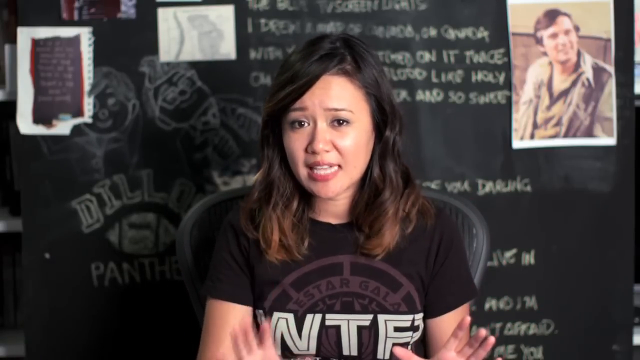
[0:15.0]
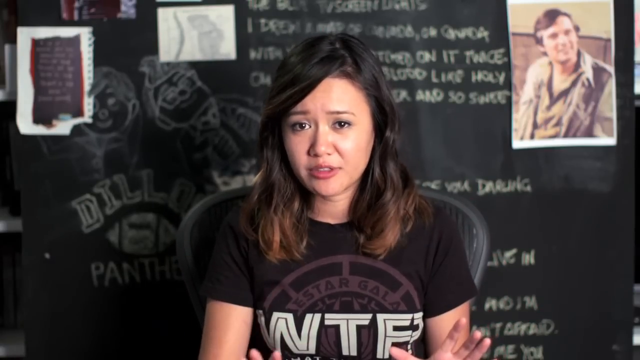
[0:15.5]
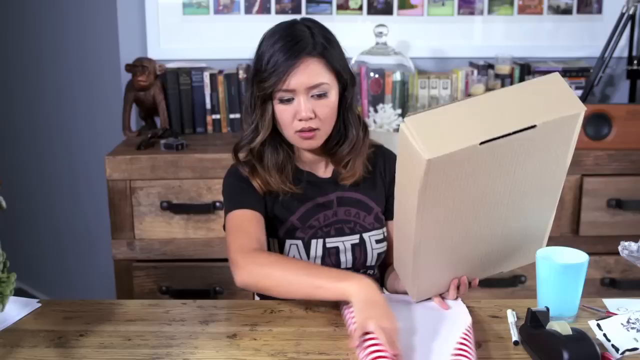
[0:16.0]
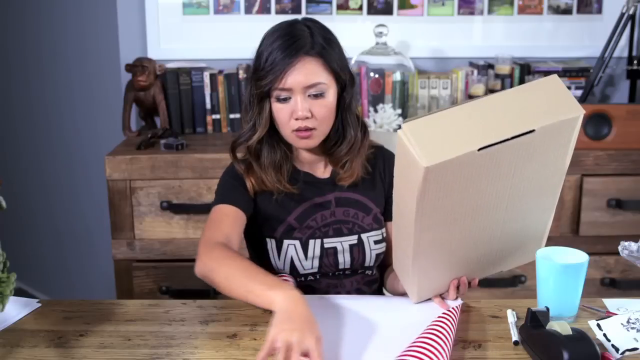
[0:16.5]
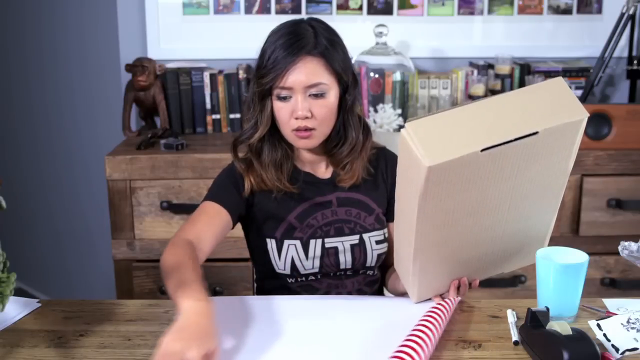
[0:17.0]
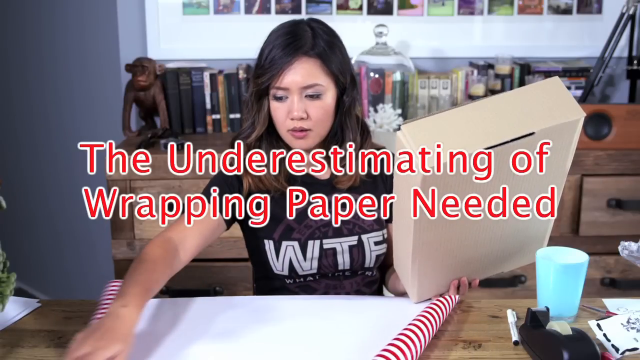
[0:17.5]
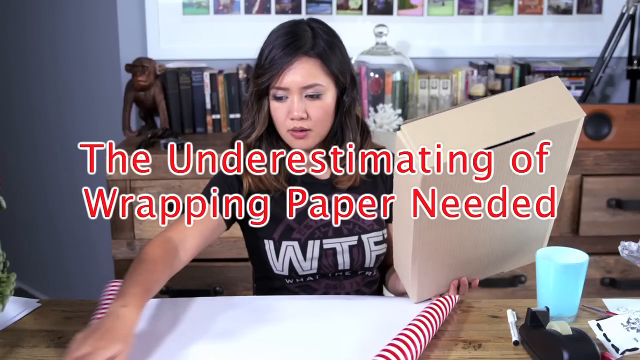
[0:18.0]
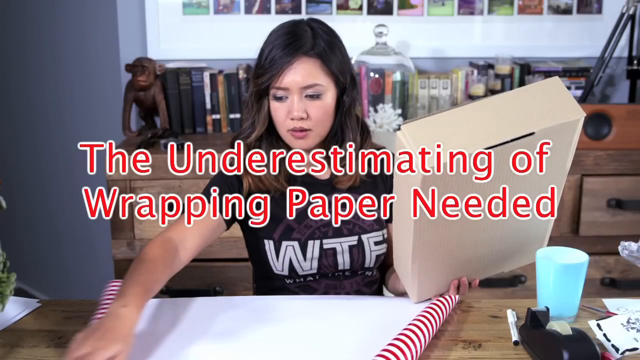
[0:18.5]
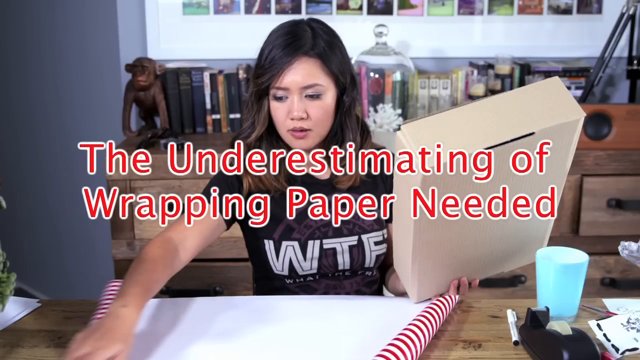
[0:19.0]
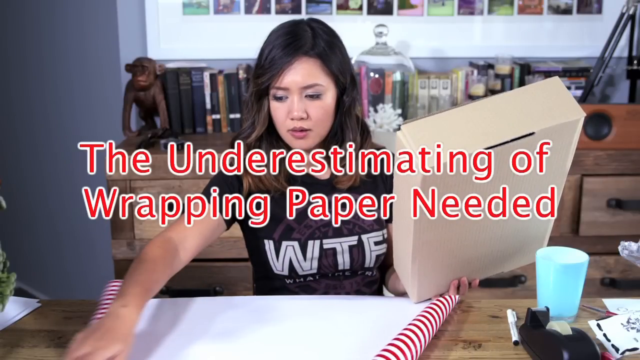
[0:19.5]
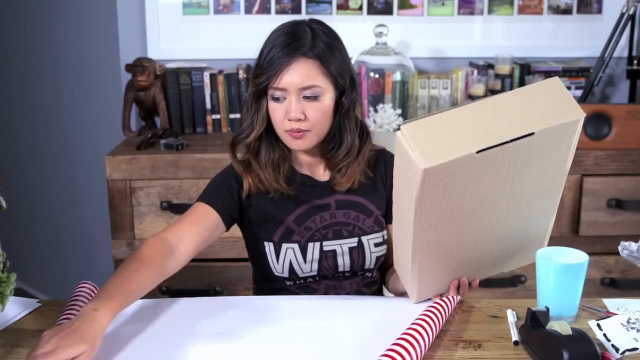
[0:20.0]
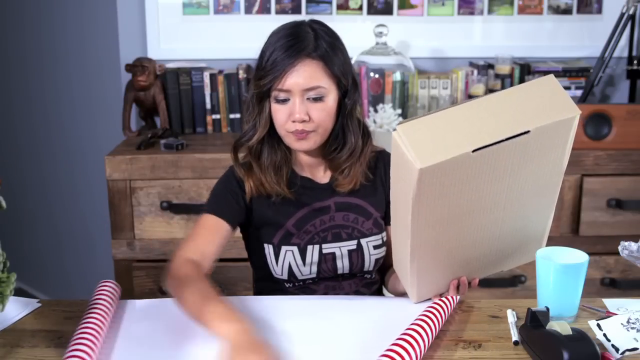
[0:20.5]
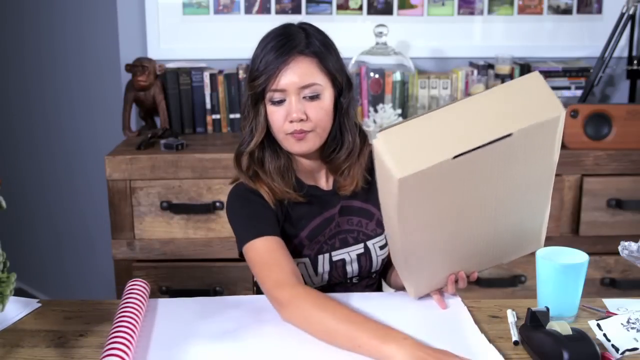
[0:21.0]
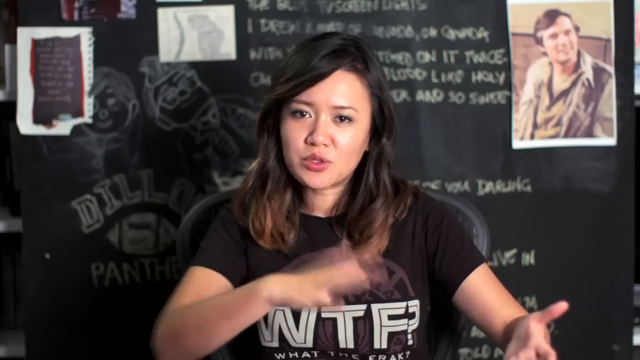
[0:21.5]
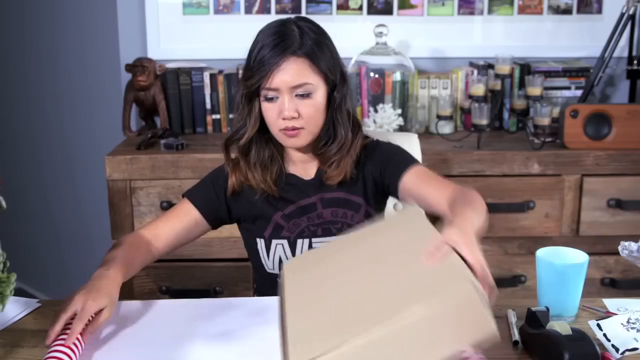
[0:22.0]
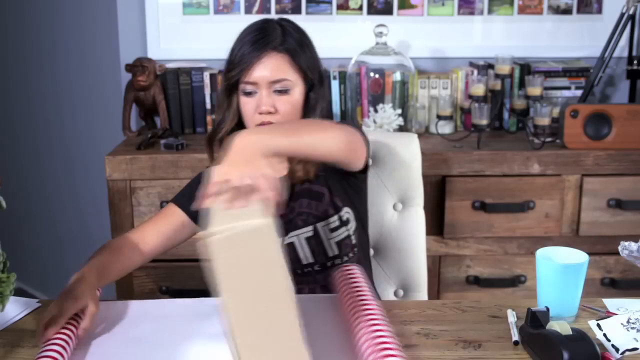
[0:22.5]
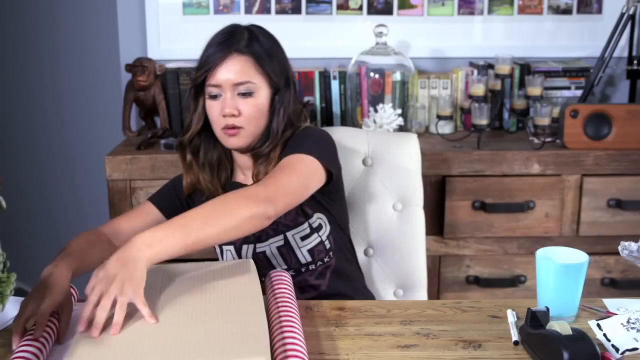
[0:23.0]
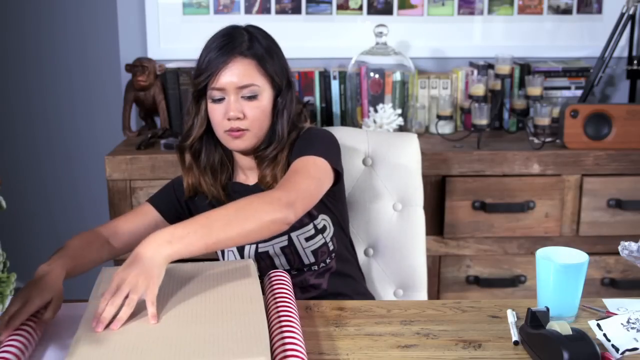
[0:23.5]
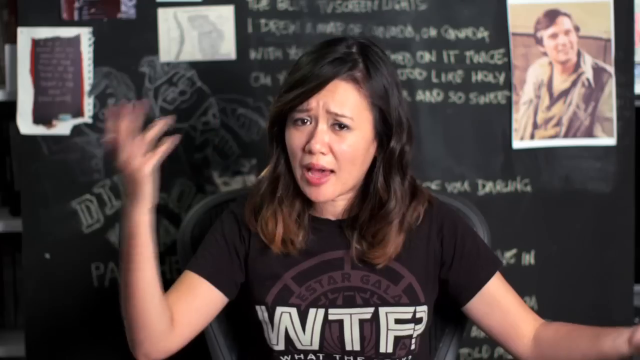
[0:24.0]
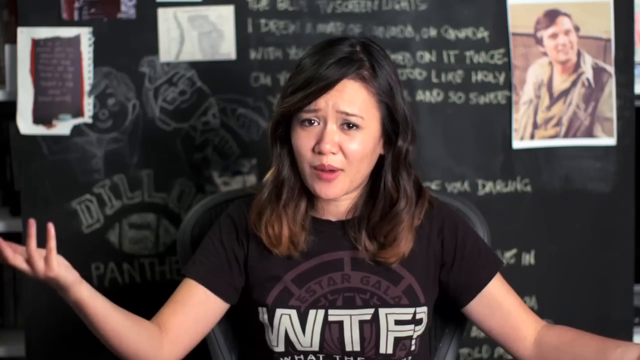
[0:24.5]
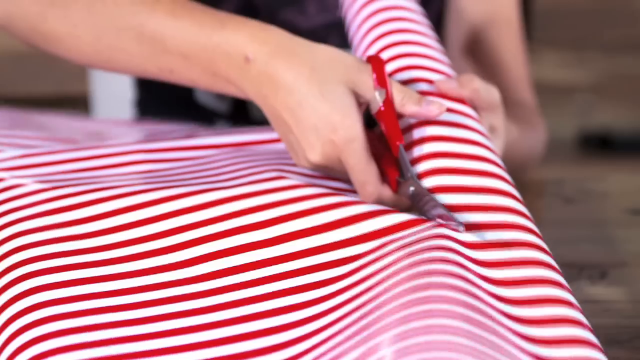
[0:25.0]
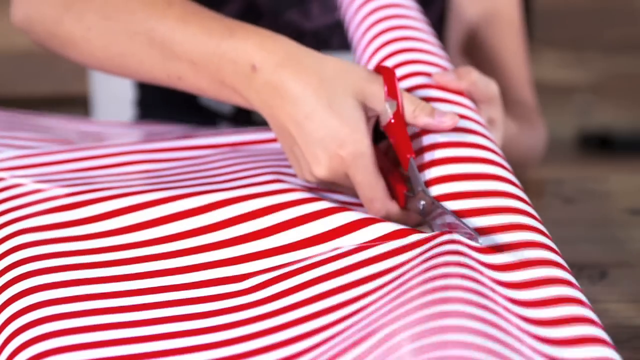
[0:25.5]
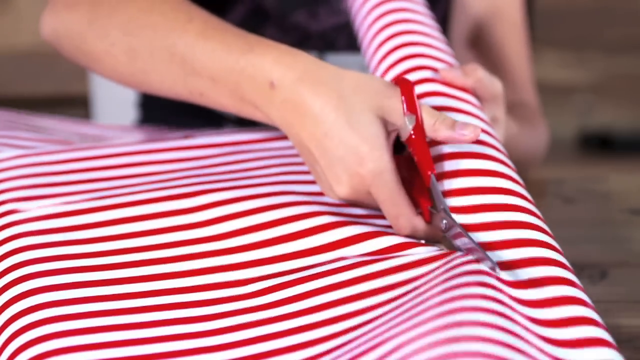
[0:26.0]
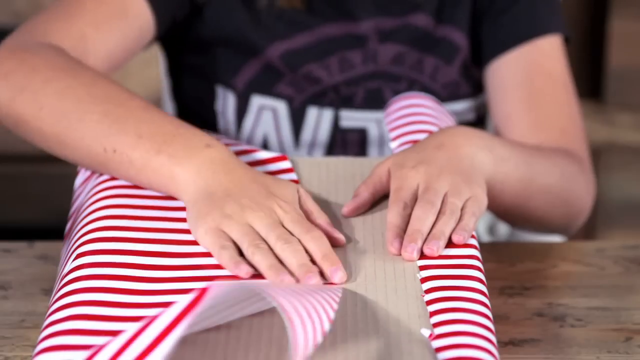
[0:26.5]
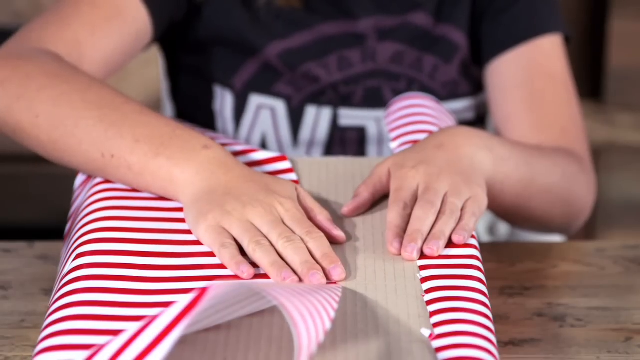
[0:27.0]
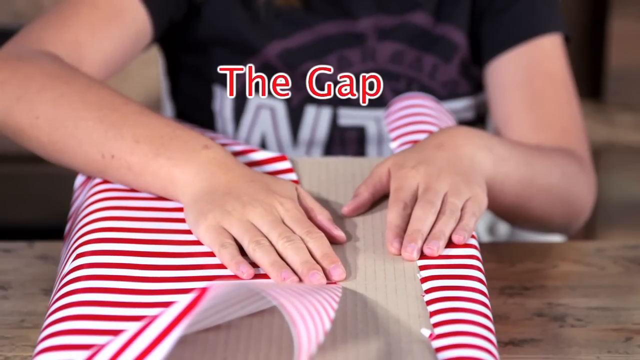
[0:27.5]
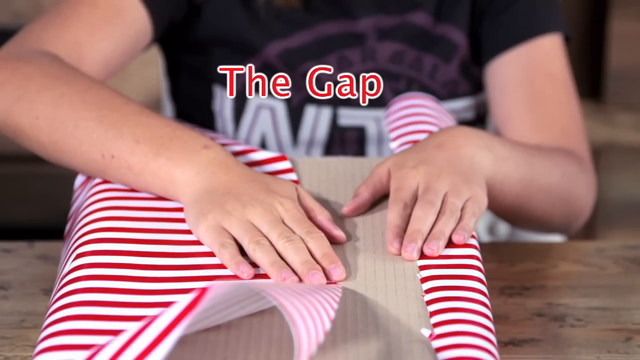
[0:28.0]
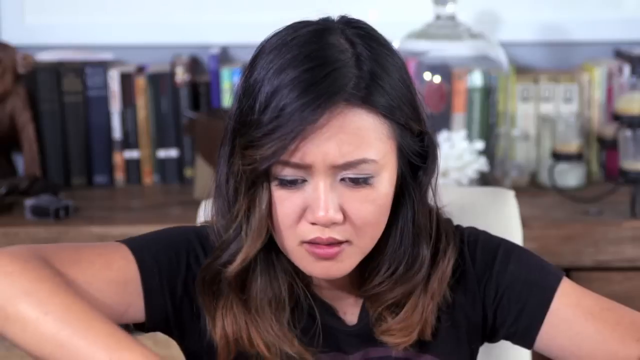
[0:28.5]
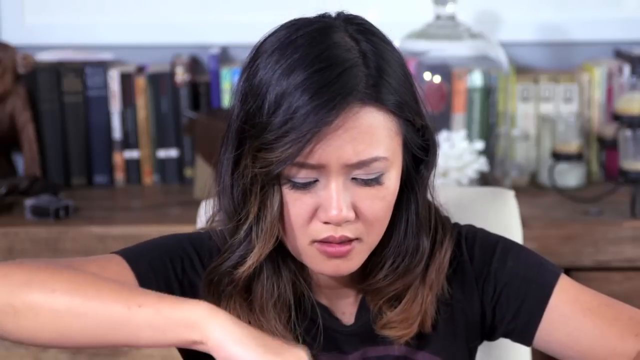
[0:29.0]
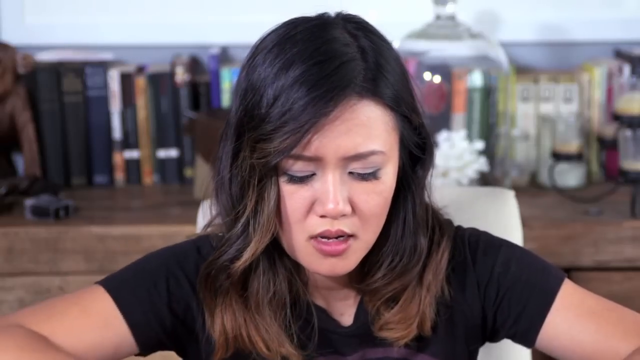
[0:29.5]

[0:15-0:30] A picture shows a woman trying to wrap something, then a woman holding a box and wrapping paper. She talks, wearing the "WTF?" t-shirt, then cuts some wrapping paper, but it is too short to cover the box. She talks again and kind of tries to measure the wrapping paper, but it is cut too short. Text reads "the gap" and "you know you're bad at gift-wrapping" with "W", and then text beginning "underestimating the need of wrapping paper" appears but moves too quickly to be fully read. She talks again and cuts the wrapping paper, which has red and white stripes. On the bottom right-hand side are "YouTube", "CC", a settings symbol and a little square; on the bottom left-hand side are a pause button, a sound button and a timer.